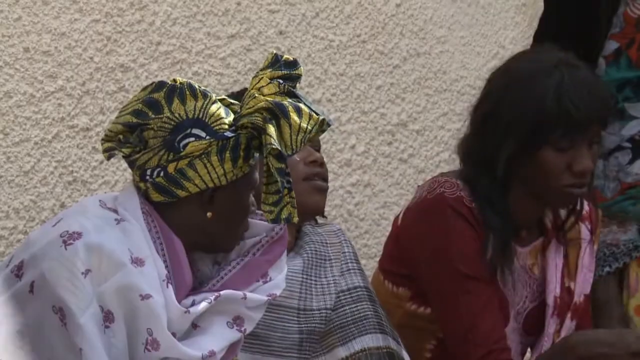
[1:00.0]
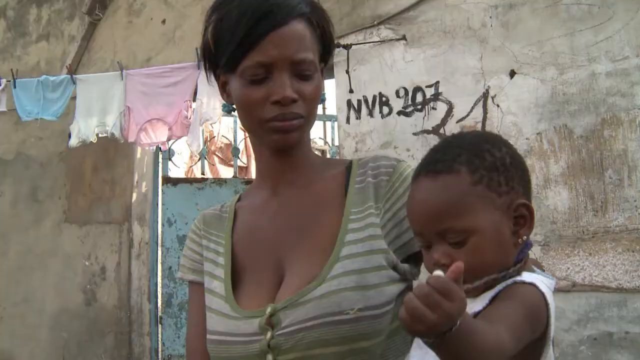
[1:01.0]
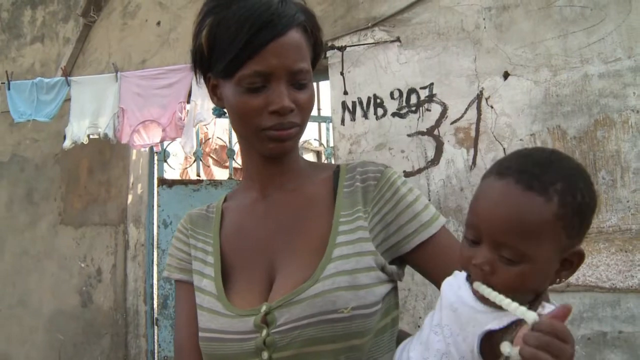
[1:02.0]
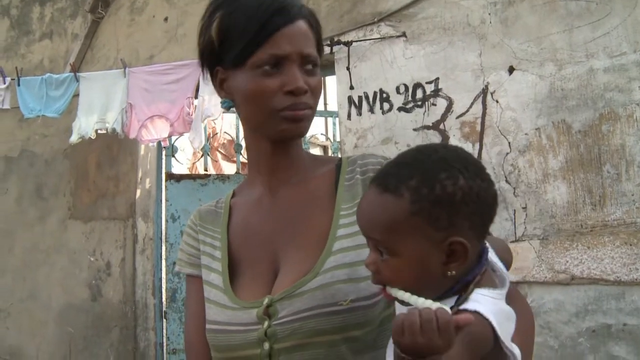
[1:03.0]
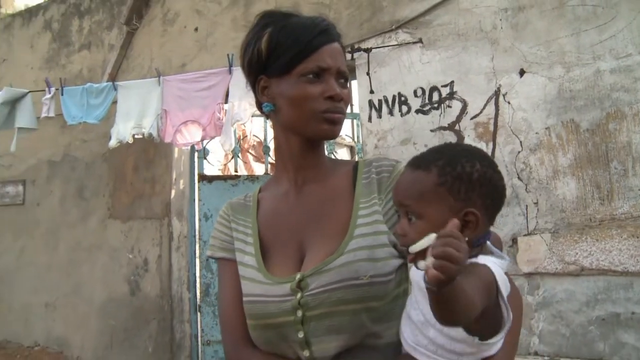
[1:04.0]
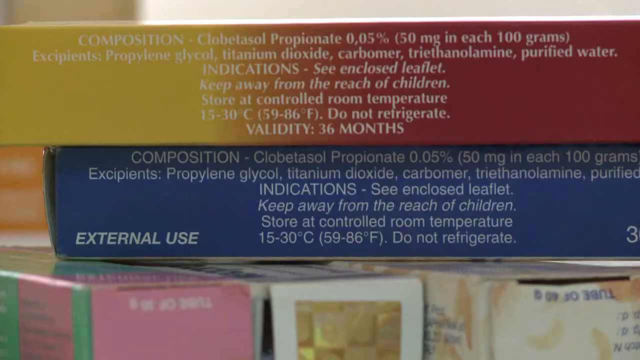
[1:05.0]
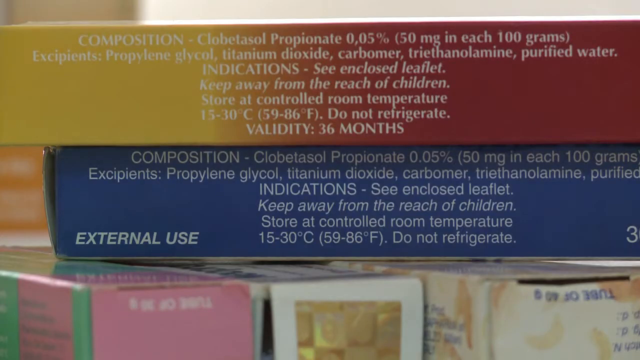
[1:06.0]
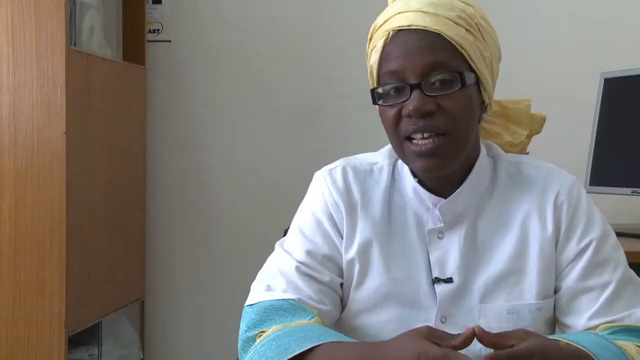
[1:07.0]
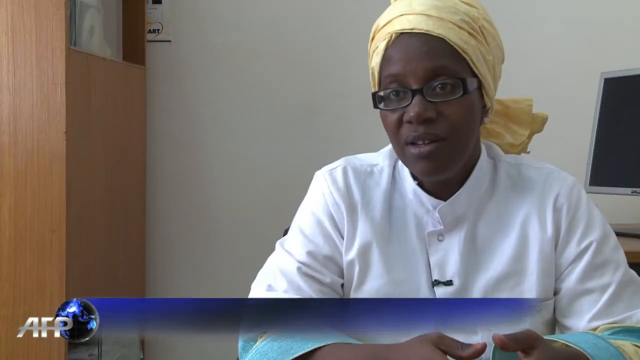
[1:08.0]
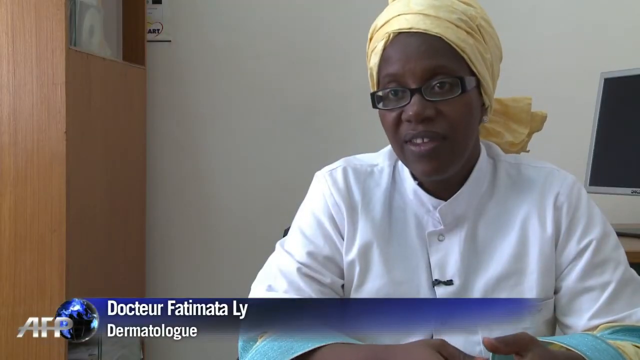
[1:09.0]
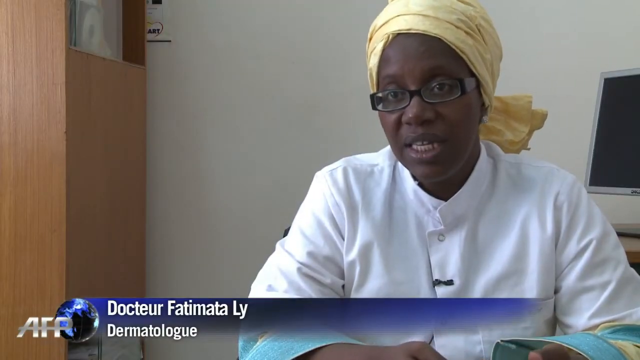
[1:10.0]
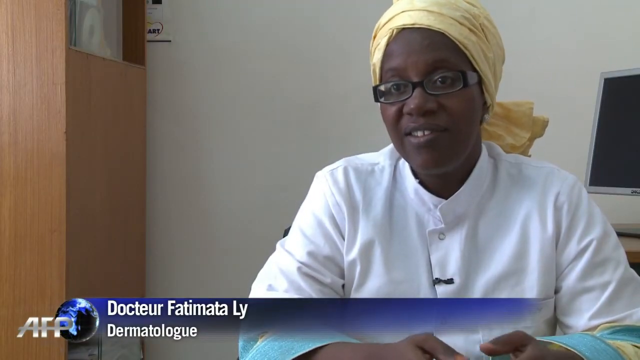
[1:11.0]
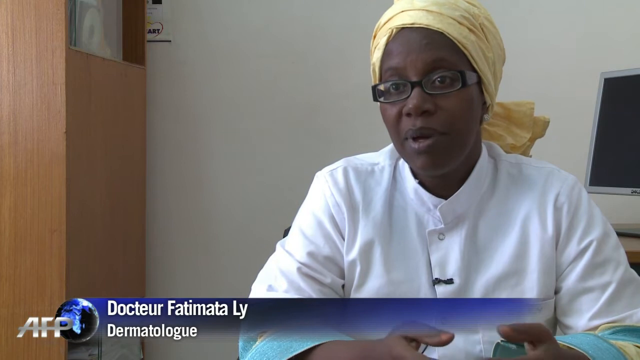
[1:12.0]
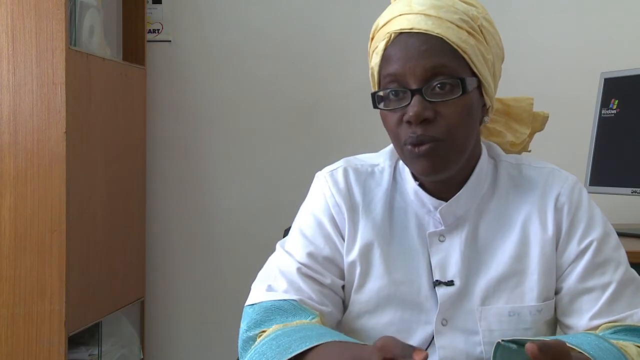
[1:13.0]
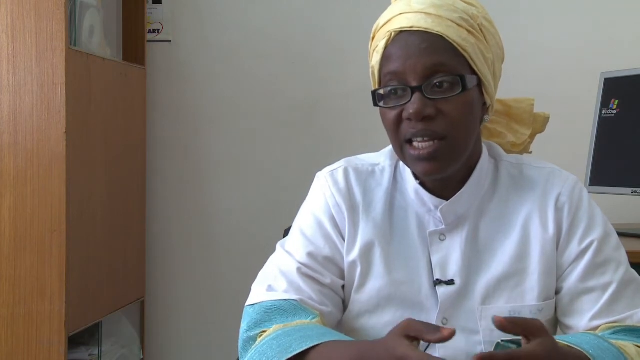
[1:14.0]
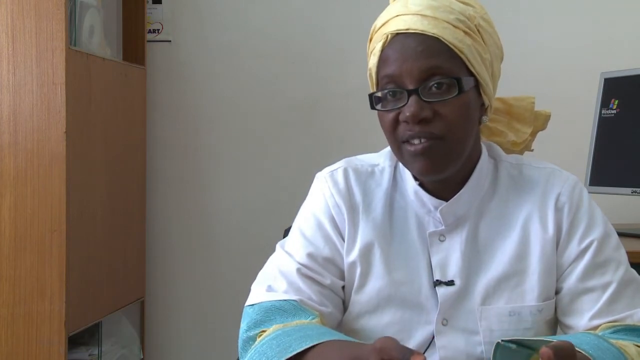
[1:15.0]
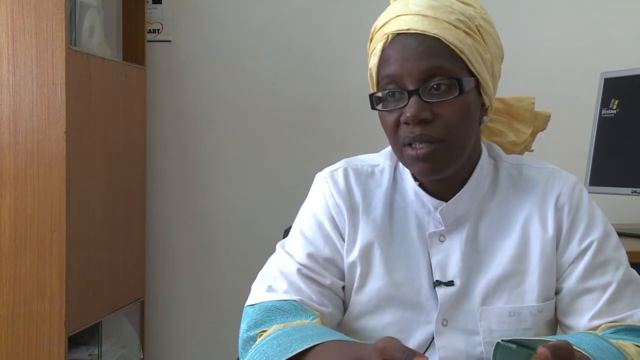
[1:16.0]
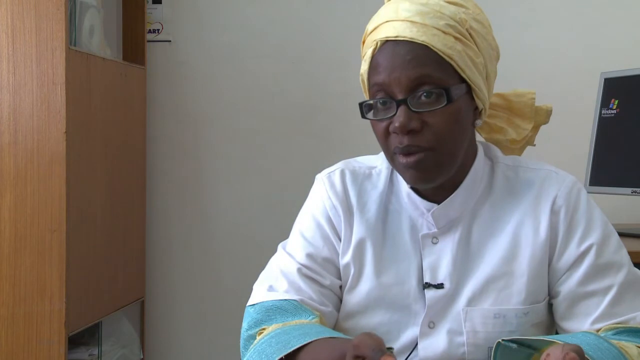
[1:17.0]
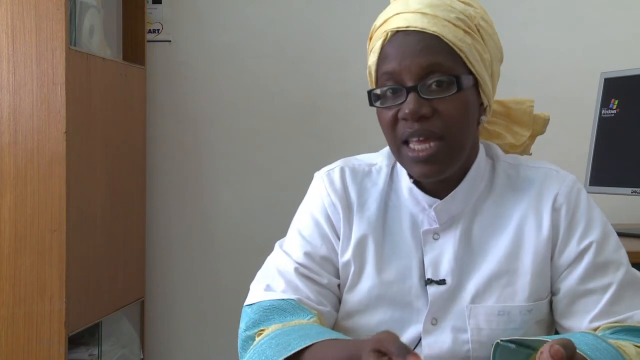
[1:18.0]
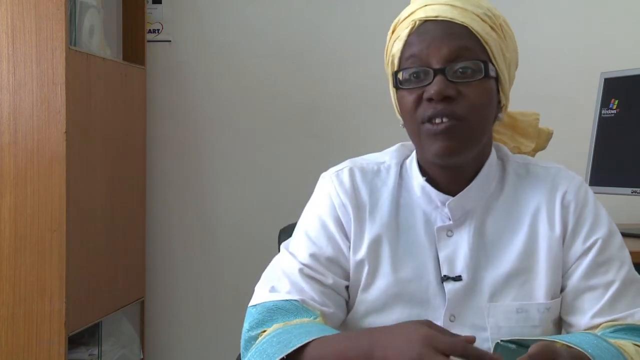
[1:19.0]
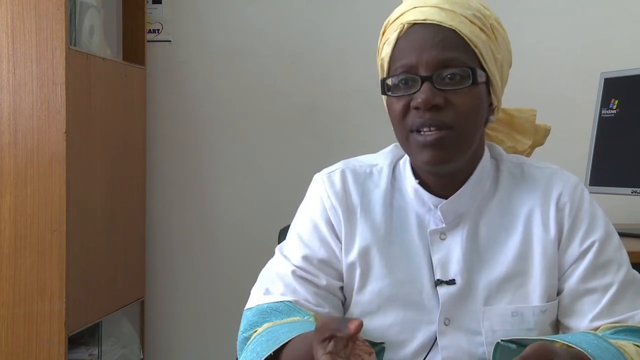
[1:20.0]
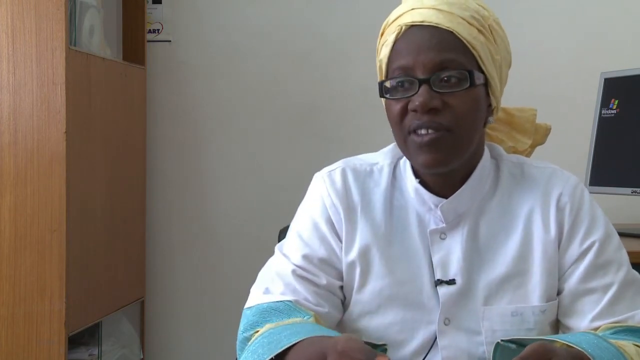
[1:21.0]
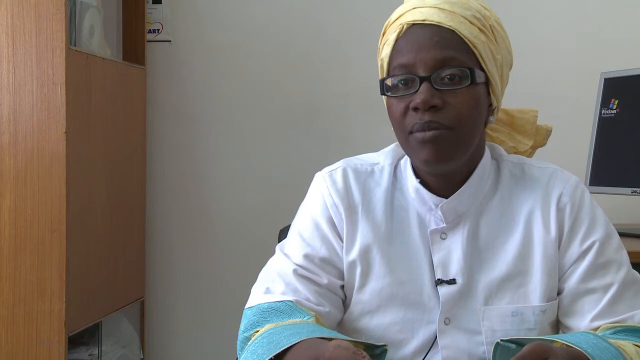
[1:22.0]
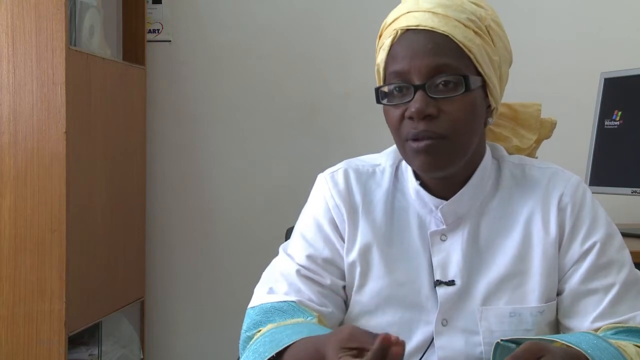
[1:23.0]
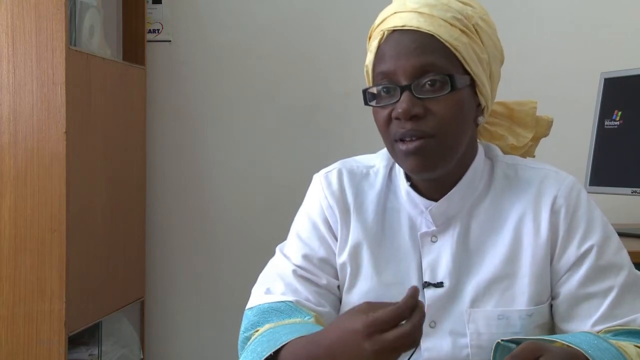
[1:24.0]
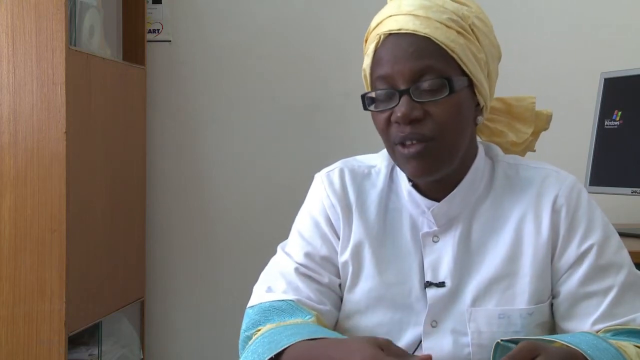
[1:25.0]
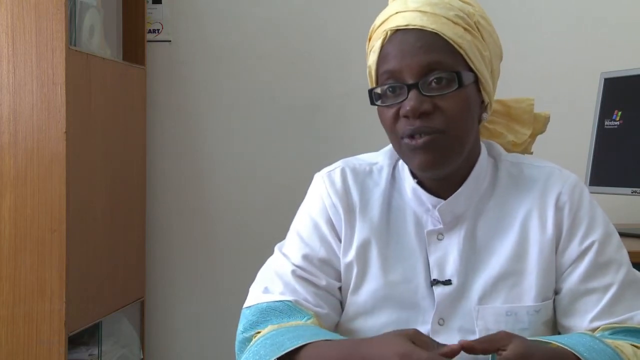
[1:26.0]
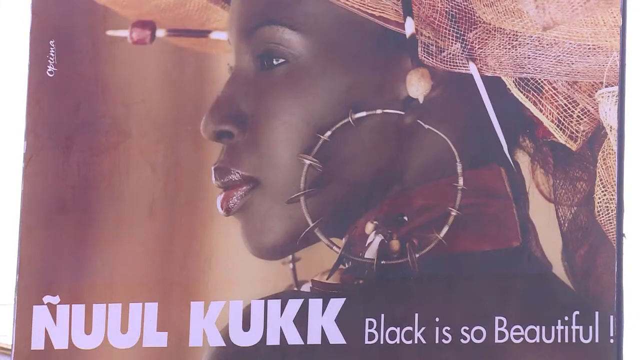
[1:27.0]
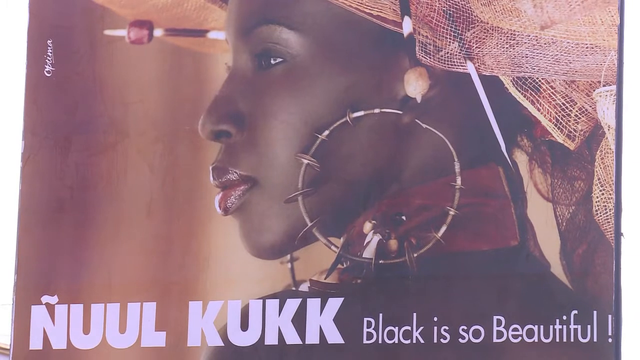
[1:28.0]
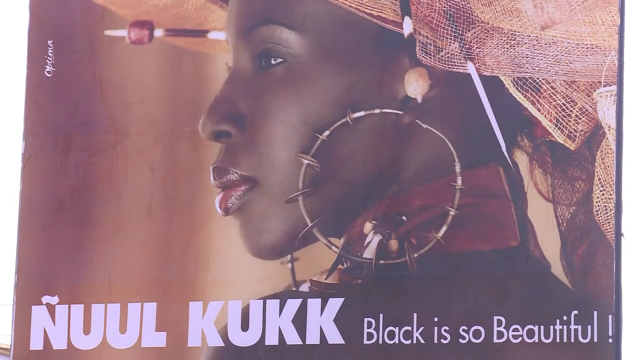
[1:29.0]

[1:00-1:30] Black women are outside in a very poor area. A young woman holds her child, who raises its left arm out; there is graffiti on the wall, and a few pieces of her clothing hang outside. Boxes are stacked on top of boxes and appear to be ingredients for some products. A doctor named Fatima, a dermatologist who seems to be in the same country as the other women, wears a yellow head wrap, a white jacket and black glasses. She speaks in a very plain office with a computer monitor behind her, gesturing with her right hand, cupping it and opening it up. She shows a picture of a woman with a huge earring in her ear. Then the other women are seen sitting outside along with the woman with her baby.